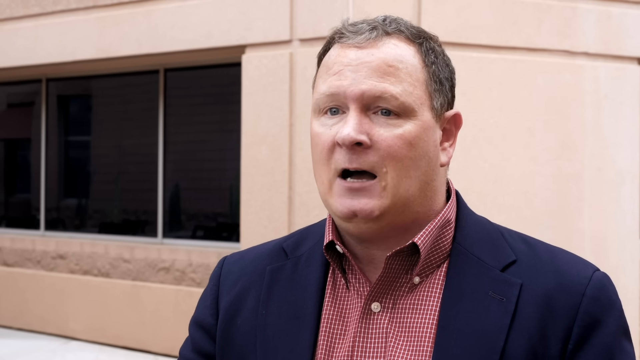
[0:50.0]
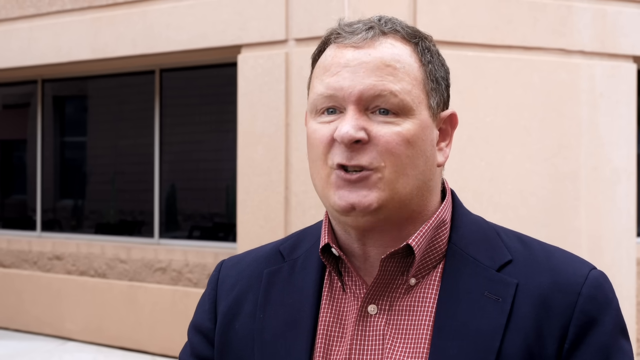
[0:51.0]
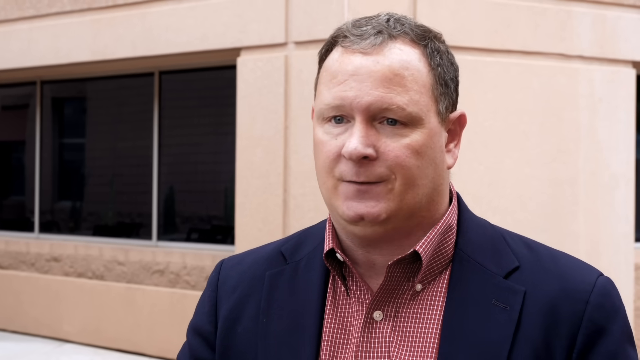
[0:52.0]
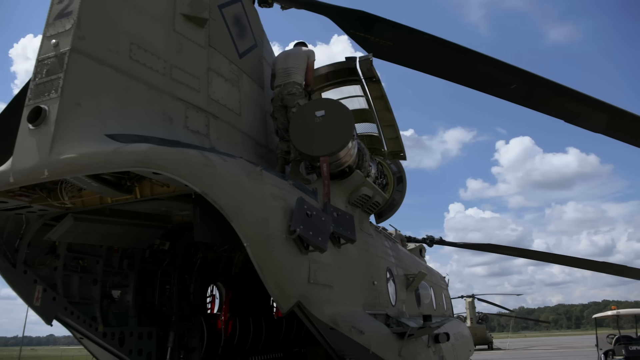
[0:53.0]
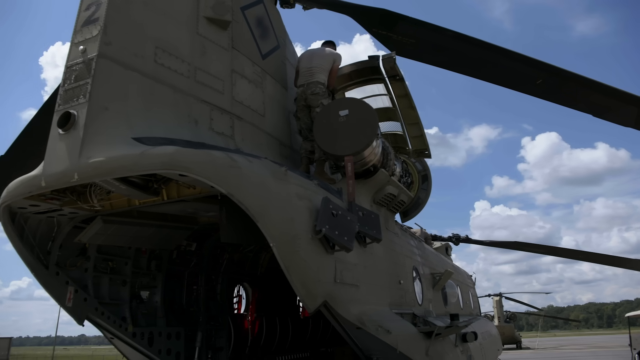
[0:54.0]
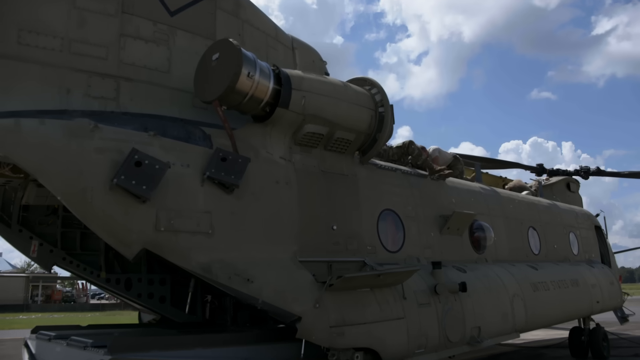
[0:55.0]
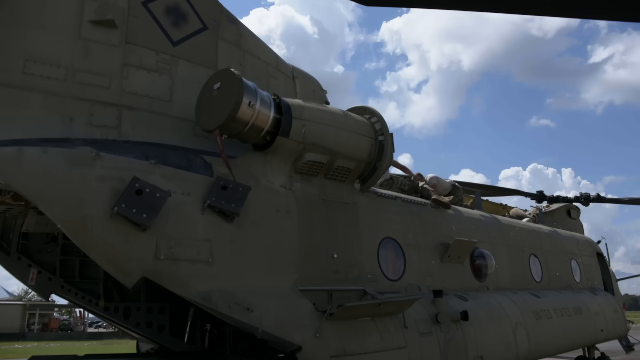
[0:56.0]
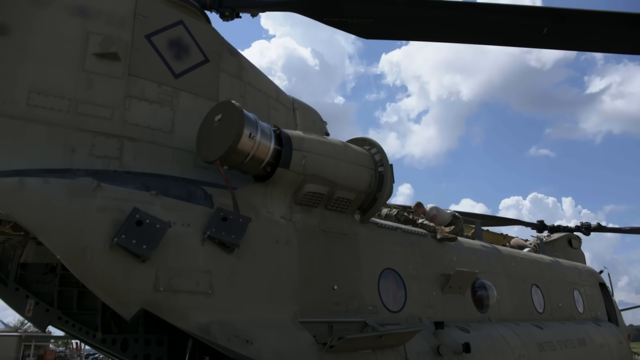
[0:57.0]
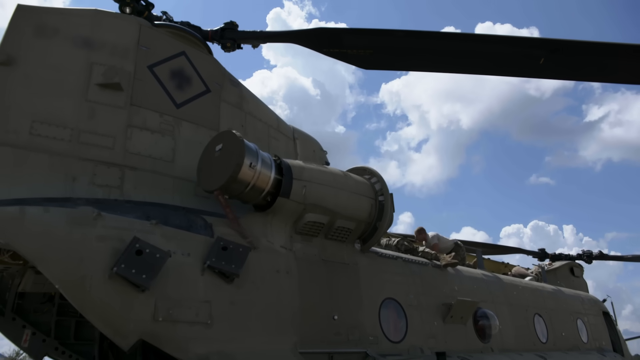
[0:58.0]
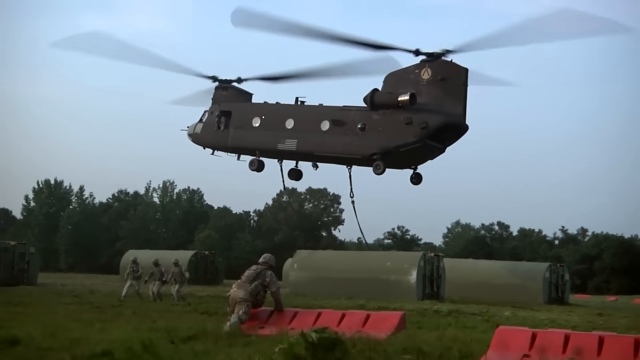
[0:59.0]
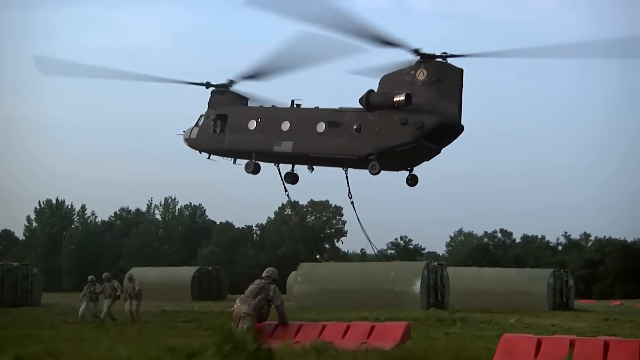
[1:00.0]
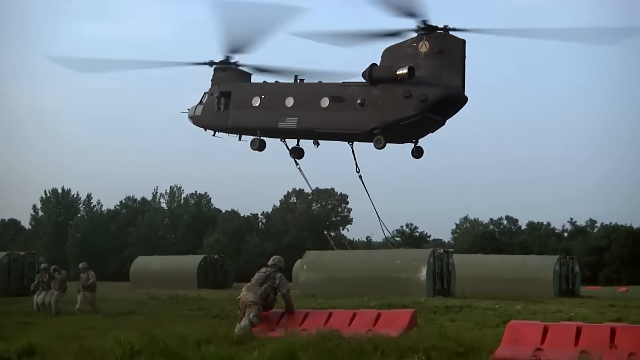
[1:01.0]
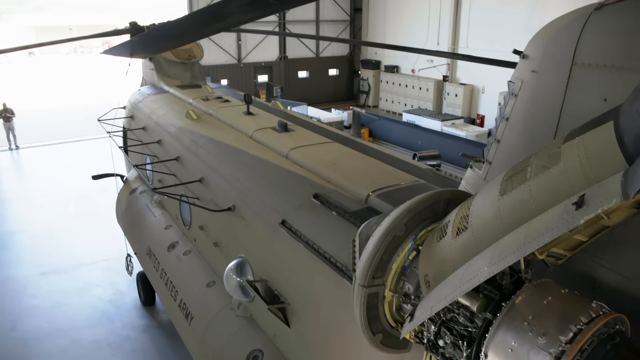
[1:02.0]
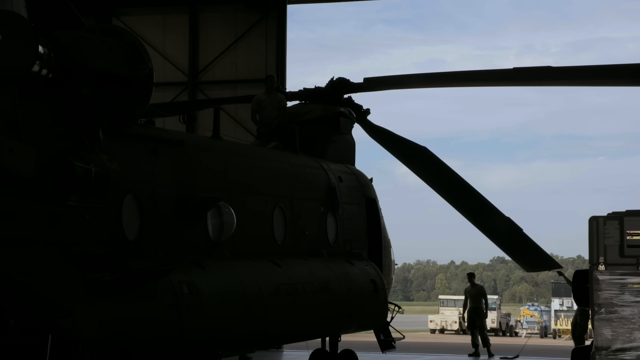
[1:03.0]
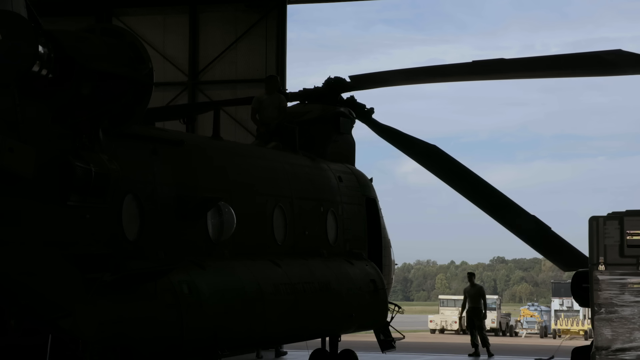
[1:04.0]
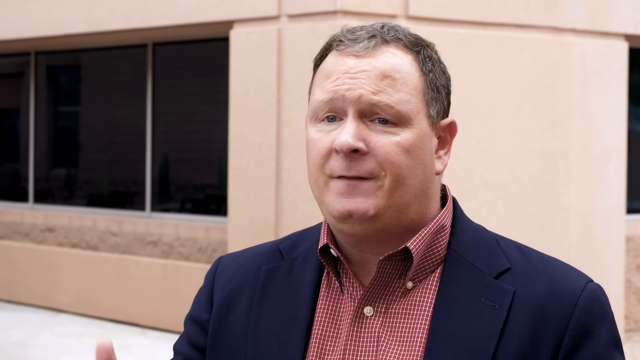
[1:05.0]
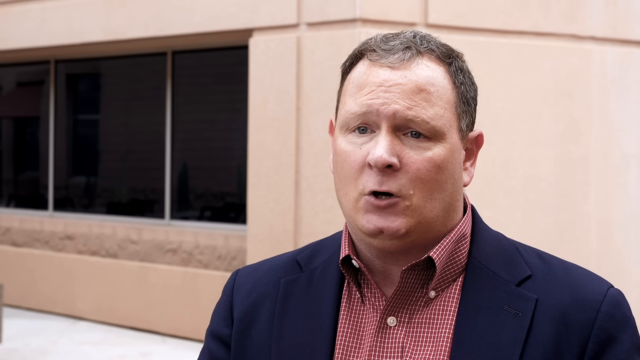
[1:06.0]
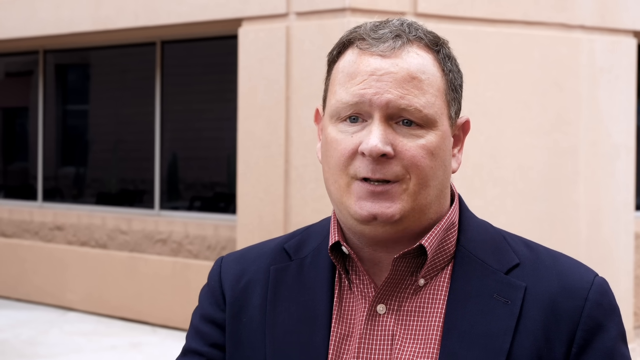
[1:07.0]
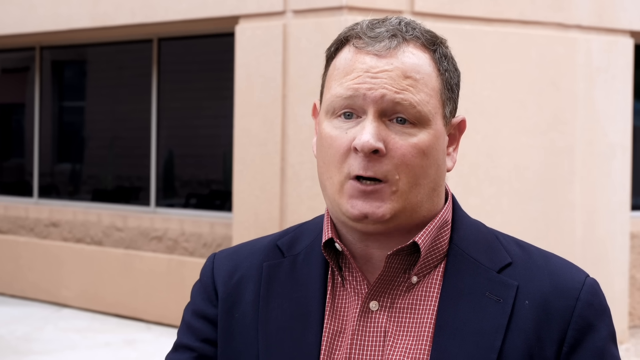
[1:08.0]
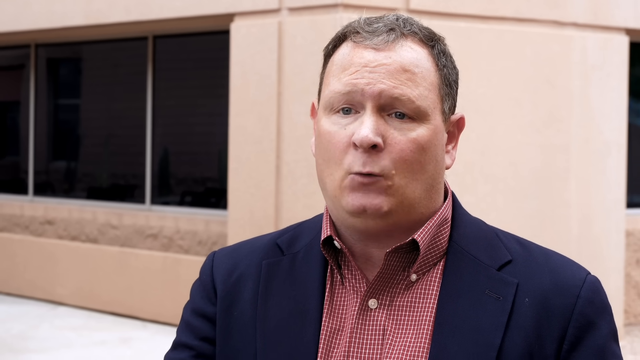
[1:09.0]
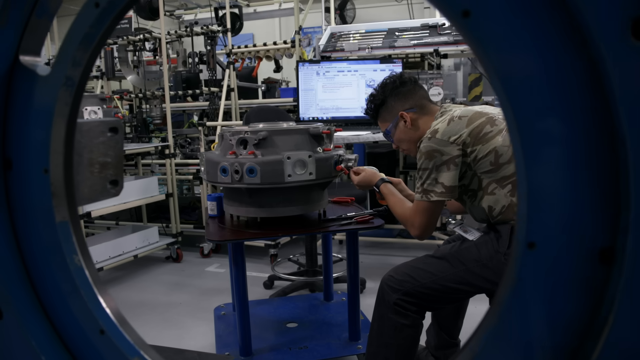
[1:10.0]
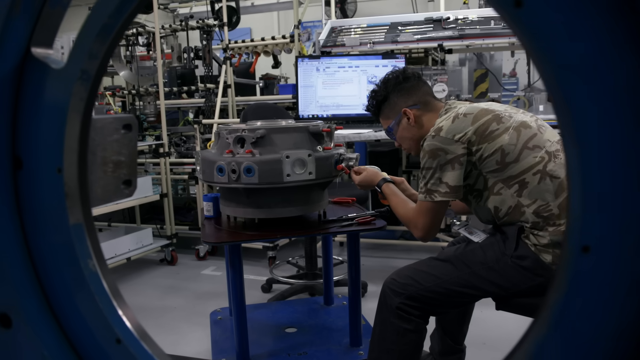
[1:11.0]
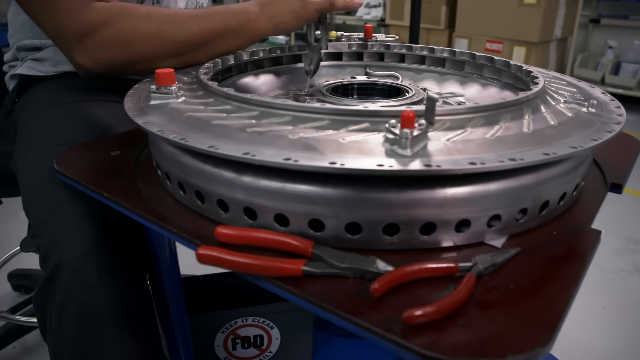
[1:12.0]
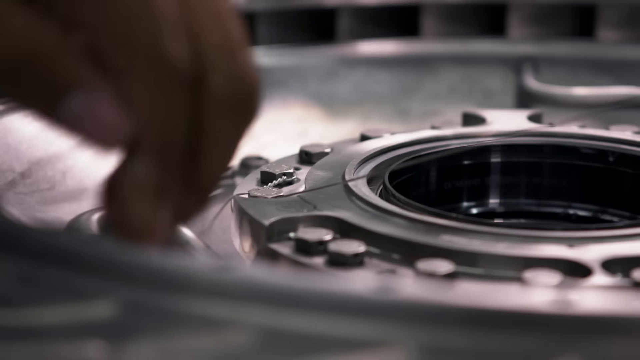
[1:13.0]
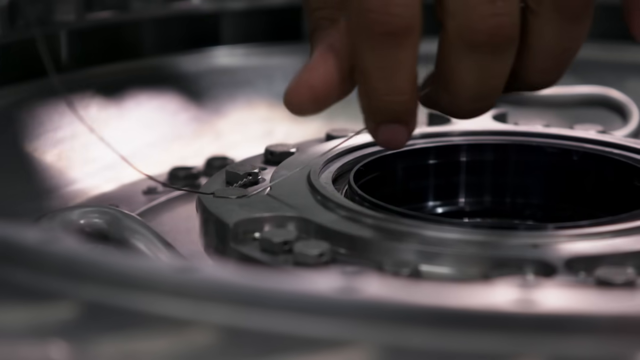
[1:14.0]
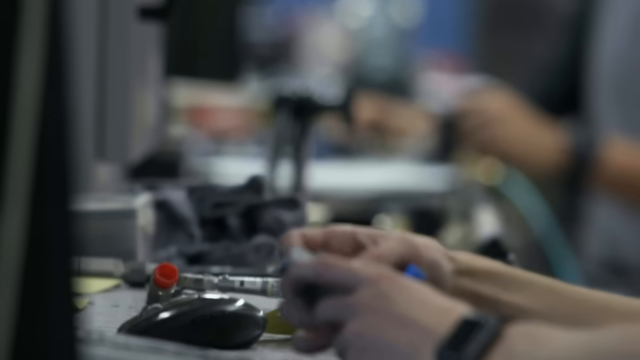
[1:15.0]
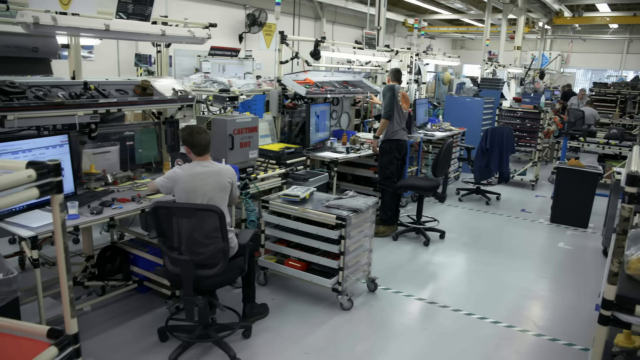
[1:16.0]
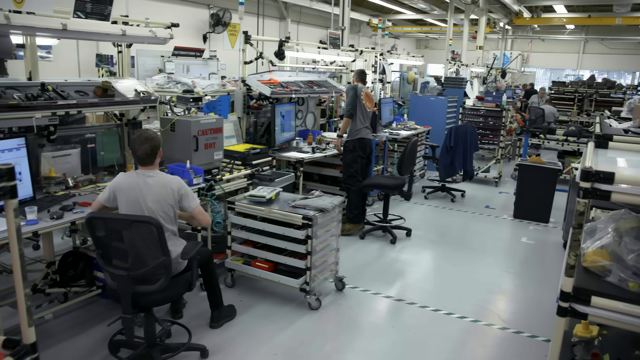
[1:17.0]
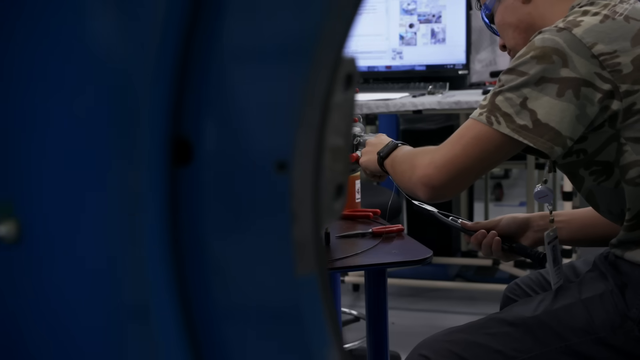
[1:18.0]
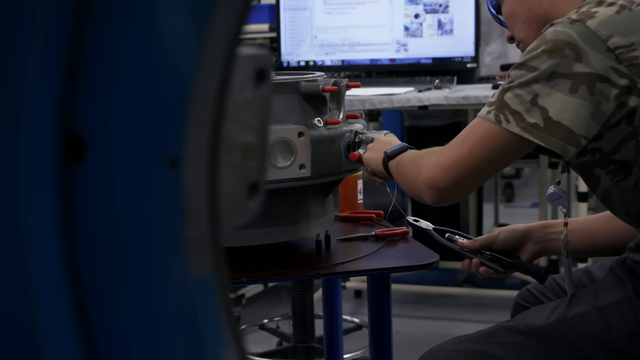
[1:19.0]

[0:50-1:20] A man speaks outside a tan building, wearing a navy blue suit jacket with a red and white button-down shirt. Army aircraft are shown very up close: a helicopter-like aircraft with two propellers, one in the front and one in the back. It flies low and lifts straight up off the ground. A person works on a piece of the engine inside what is more like a lab, with several rows of people working on parts for these aircraft. They lean over, and some are threading bolts and pieces together. In one shot, as the aircraft lifts off, it looks like it is attached to some ropes. A man stands at the entranceway of the carrier where the aircraft is stored.